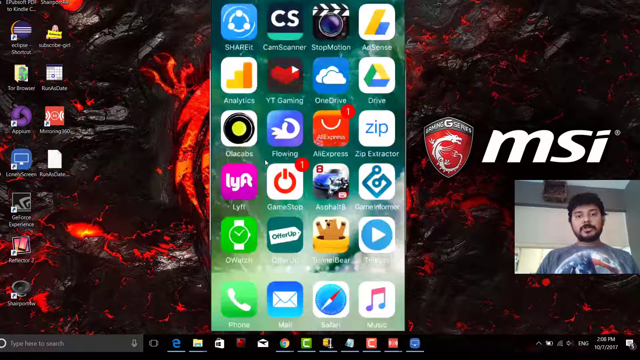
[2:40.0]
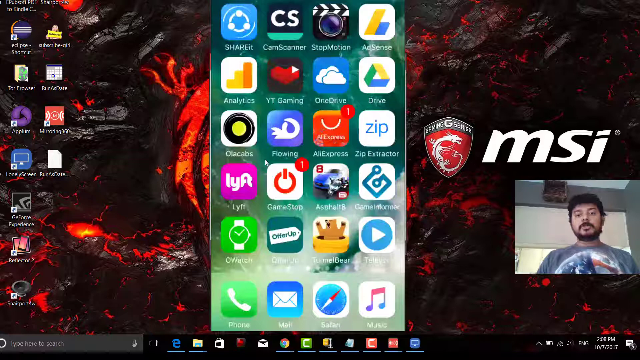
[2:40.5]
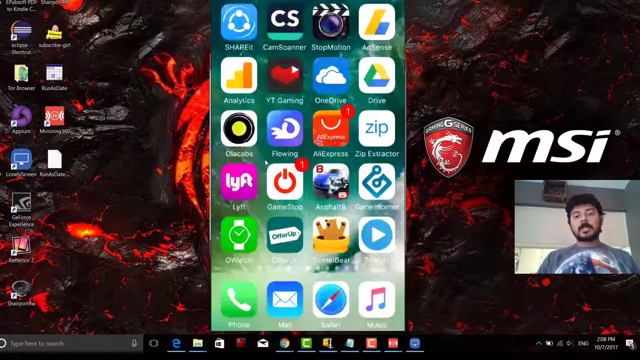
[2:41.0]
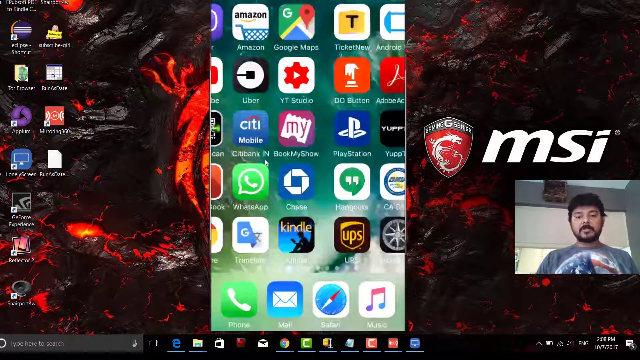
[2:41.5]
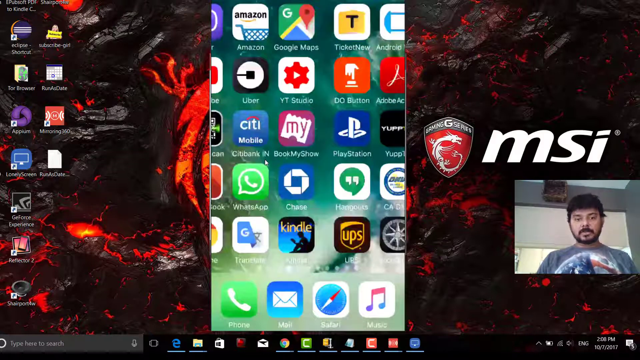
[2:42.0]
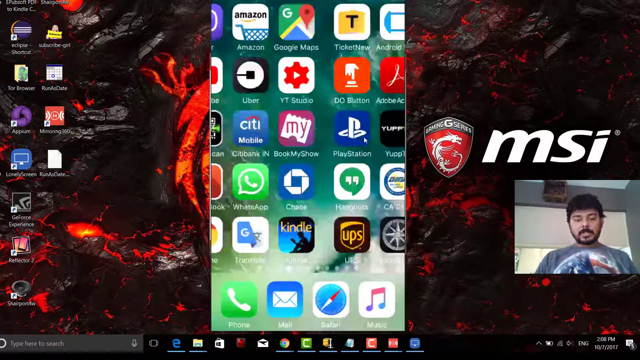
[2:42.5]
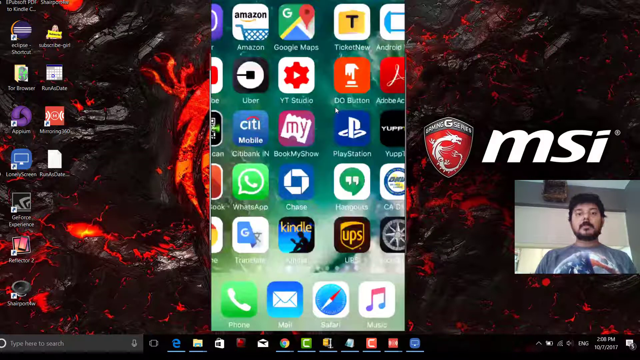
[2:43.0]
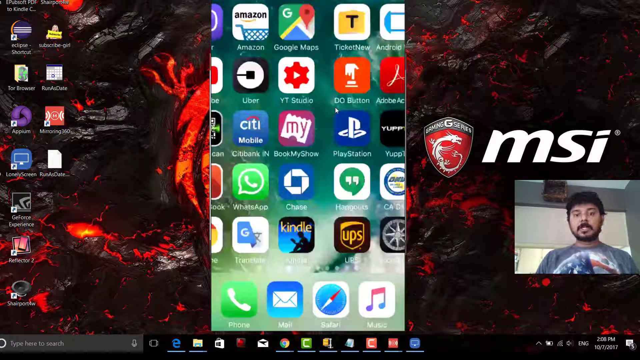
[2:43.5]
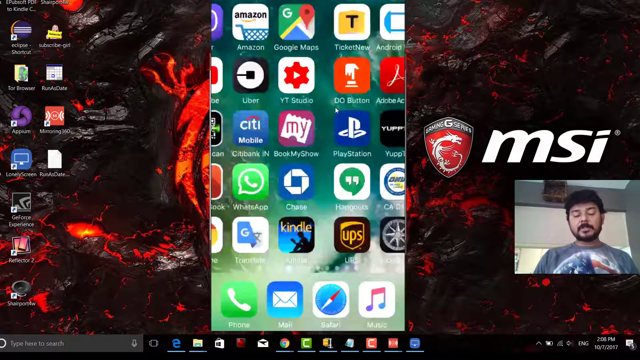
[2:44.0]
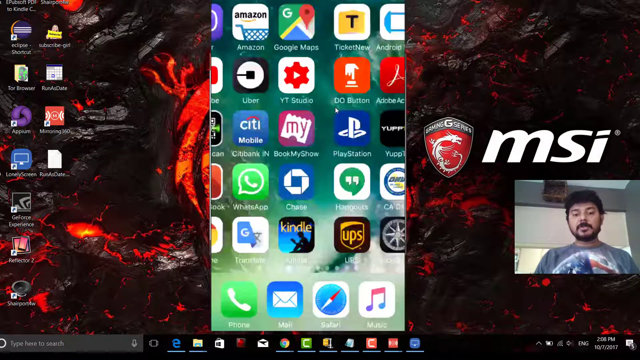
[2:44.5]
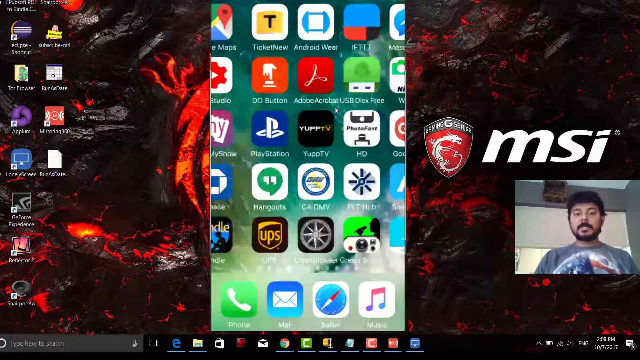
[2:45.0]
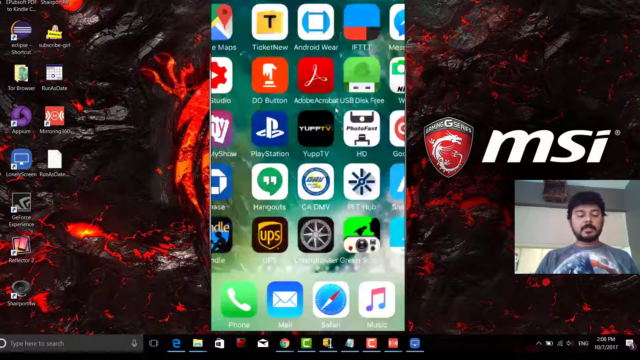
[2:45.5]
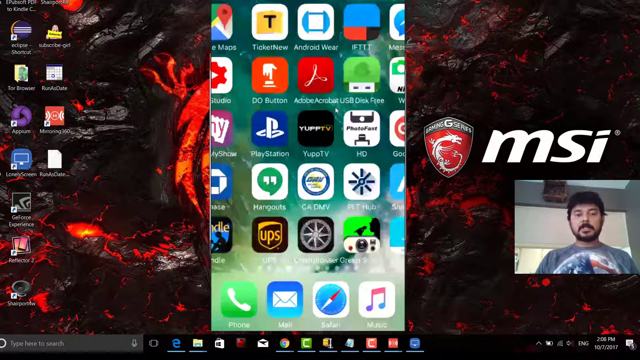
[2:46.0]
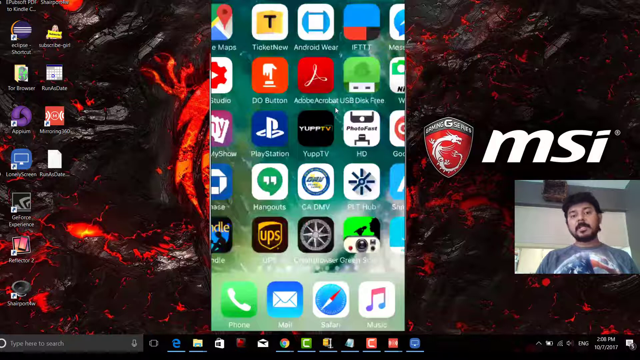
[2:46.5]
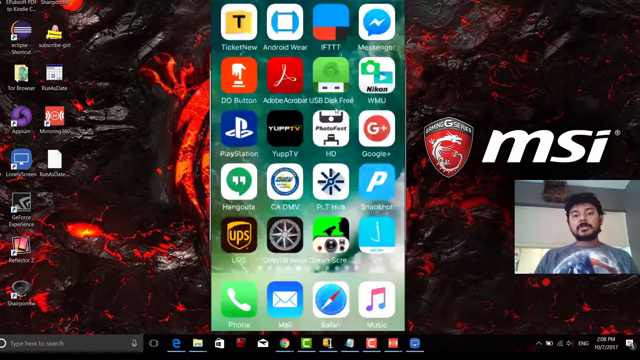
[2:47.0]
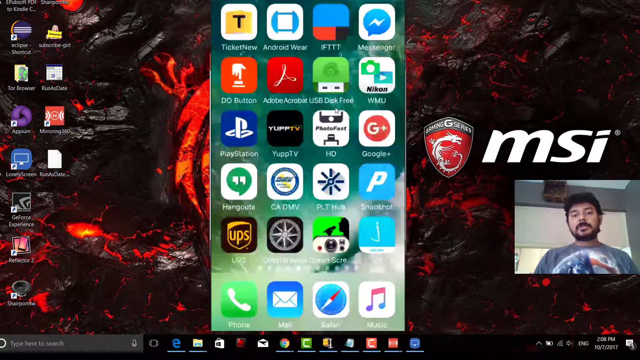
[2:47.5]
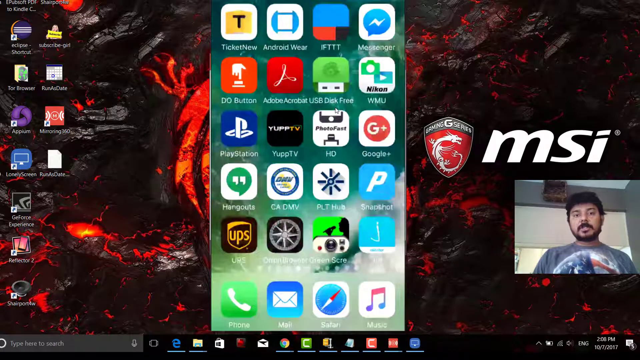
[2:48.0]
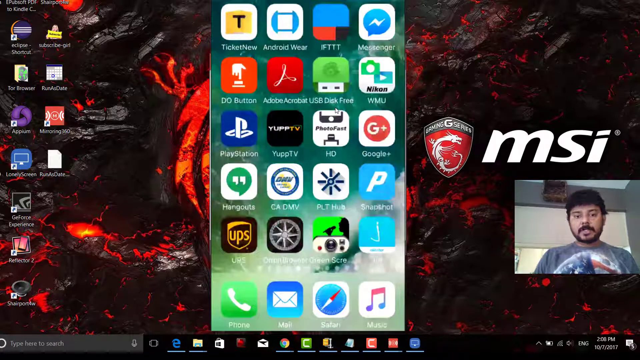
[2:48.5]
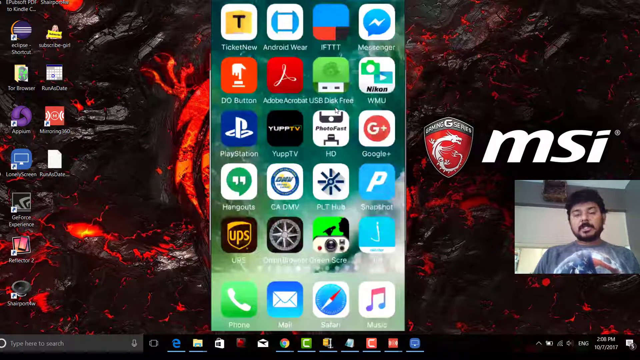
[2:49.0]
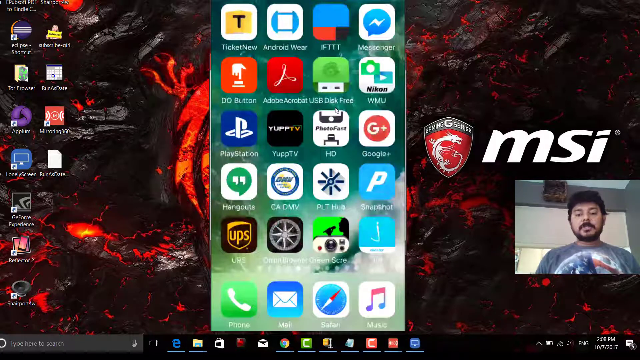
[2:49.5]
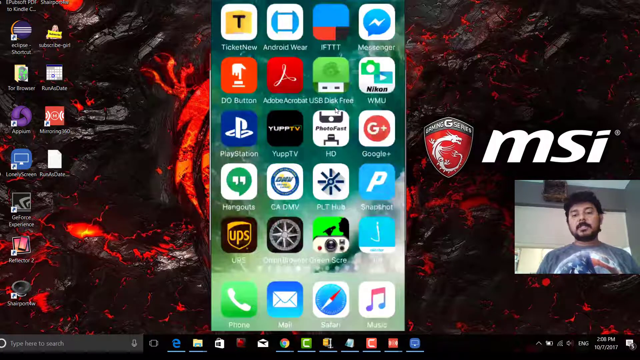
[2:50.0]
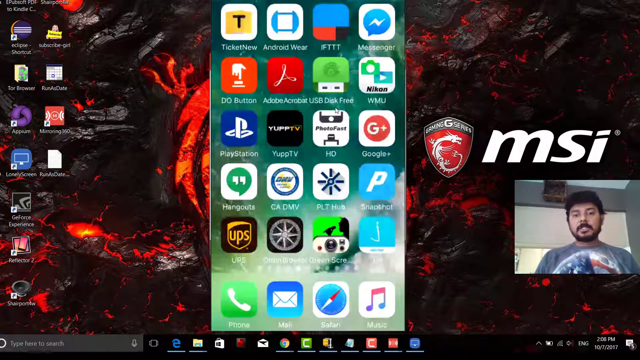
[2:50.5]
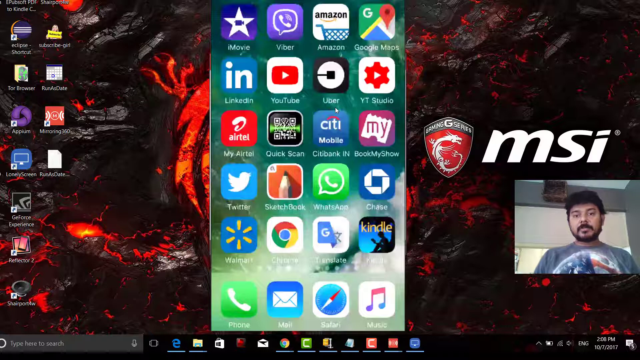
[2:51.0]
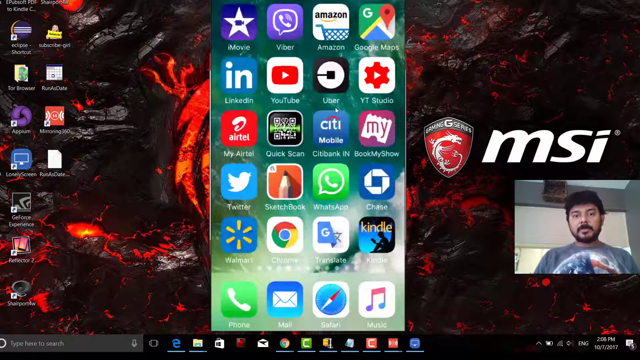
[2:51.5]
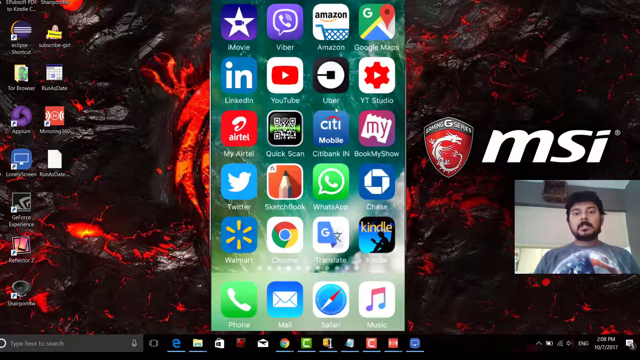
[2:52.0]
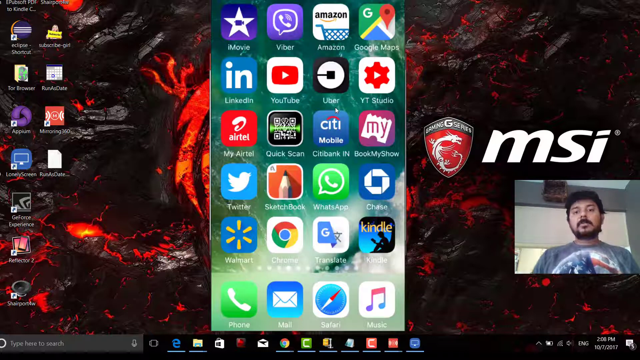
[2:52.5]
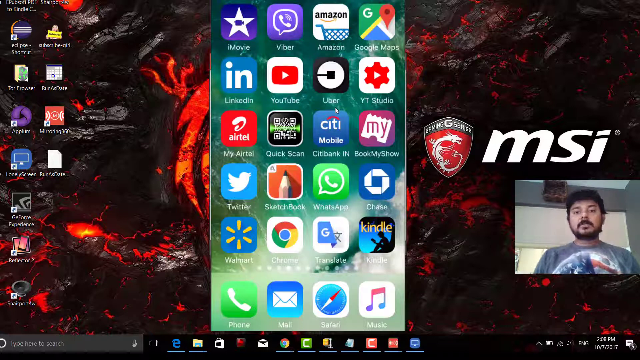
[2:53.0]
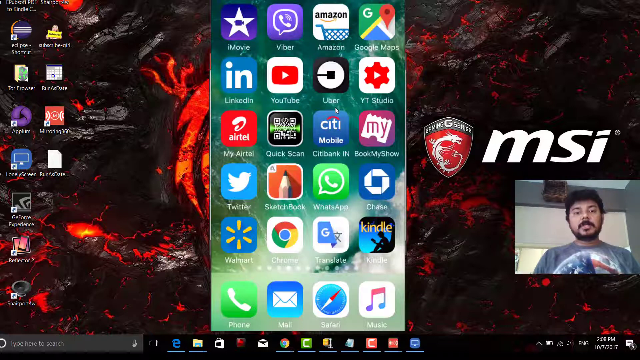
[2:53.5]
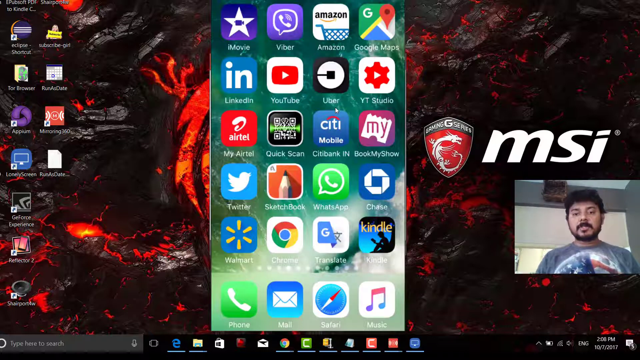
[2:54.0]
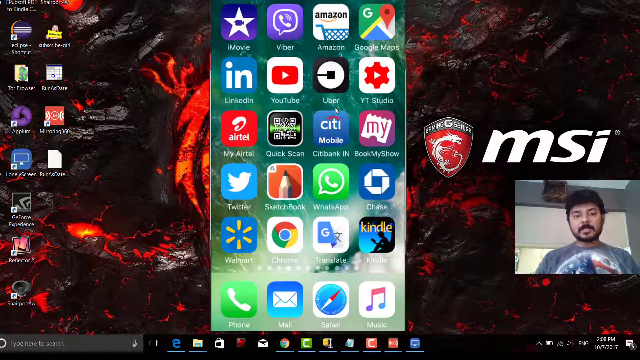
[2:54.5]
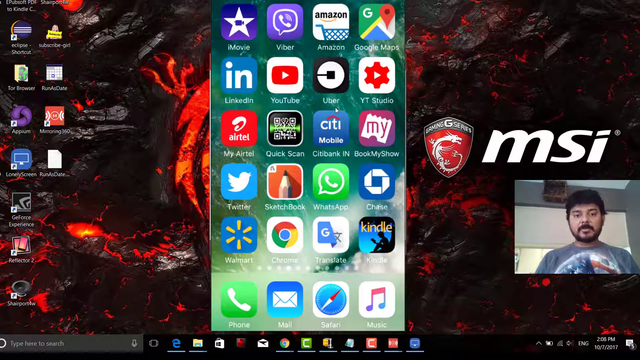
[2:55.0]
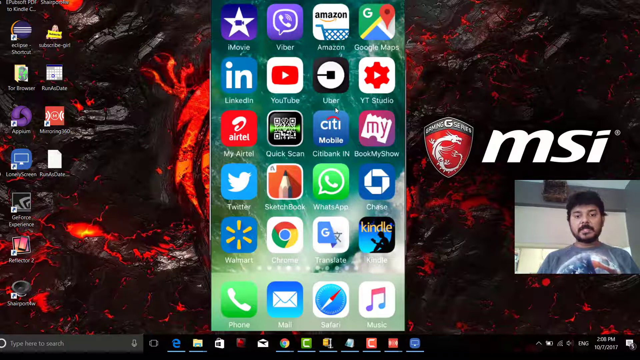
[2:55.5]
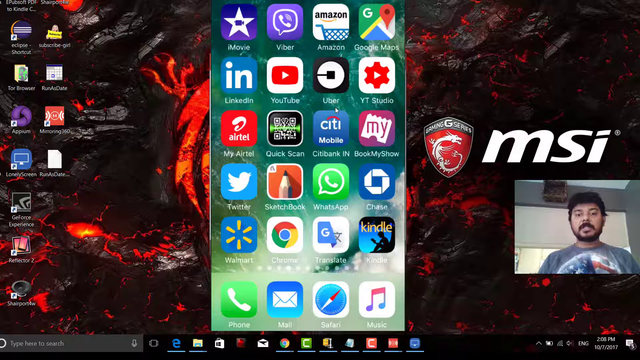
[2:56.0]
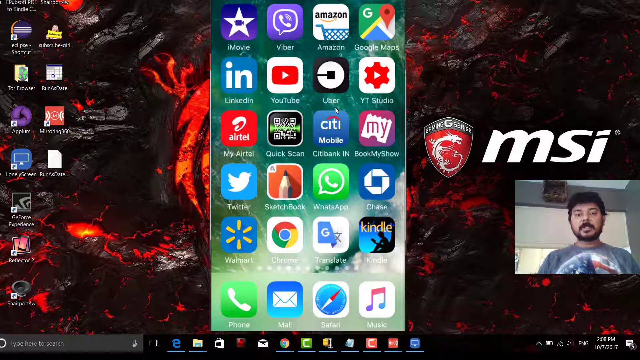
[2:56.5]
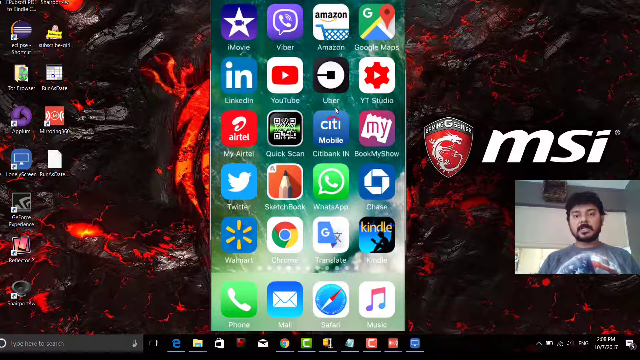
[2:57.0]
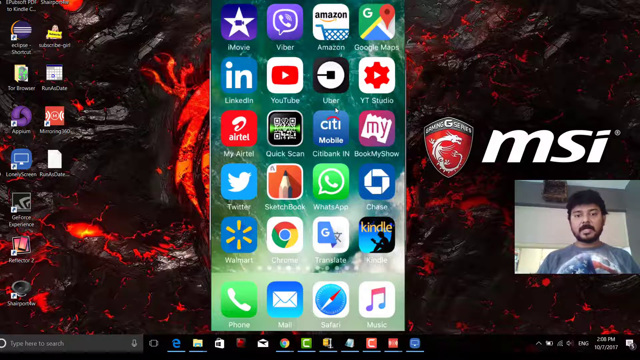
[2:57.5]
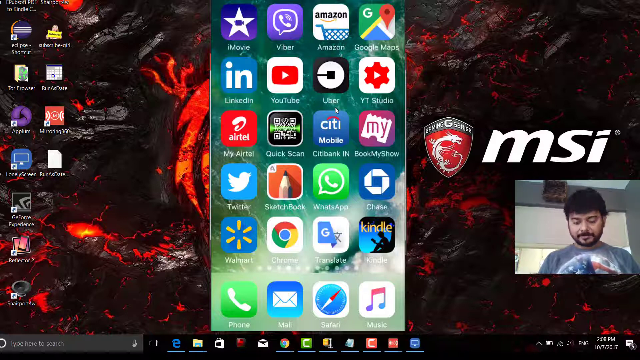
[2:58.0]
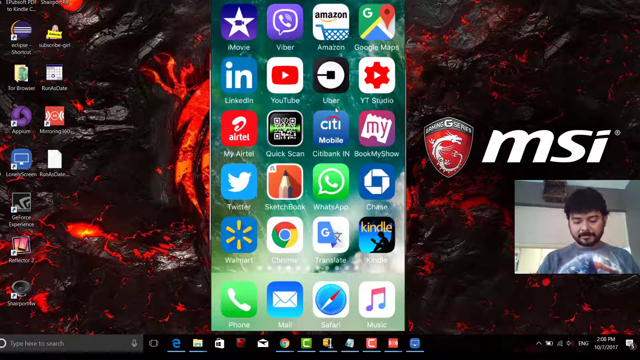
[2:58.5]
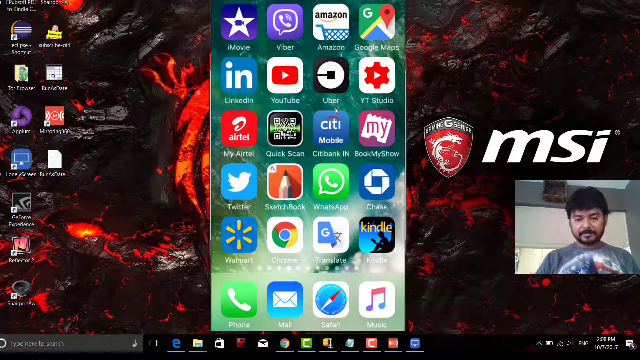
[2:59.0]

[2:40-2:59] A man vlogs in a box in the lower right corner while the page shows the mirroring 360 program. He goes through his phone, showing different pictures on the shared screen. In the lower portion there is something like a Walmart app, his phone icon, Gmail, Safari, and something like a music program. The man has a brown beard and mustache and brown hair, and wears a gray shirt with the American flag, with something like a beige wall in the background. Other recognizable apps include WhatsApp, Chase, Citibank, a PlayStation app, the UPS app, LinkedIn, Walmart, Google Chrome, and Kindle.